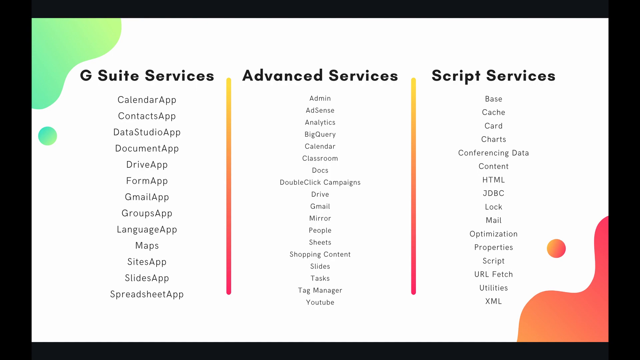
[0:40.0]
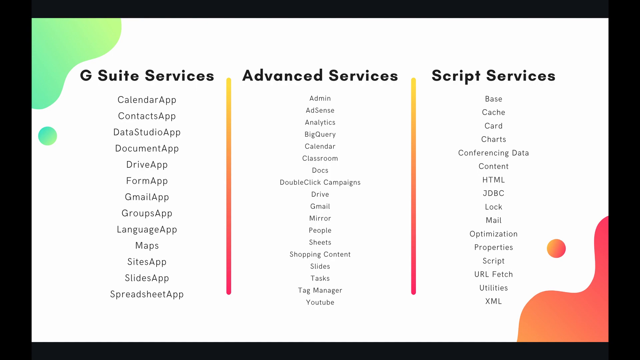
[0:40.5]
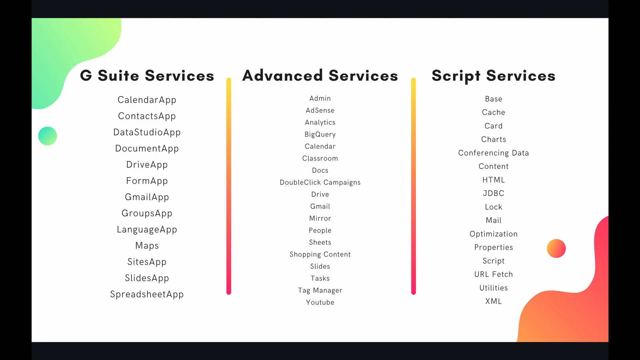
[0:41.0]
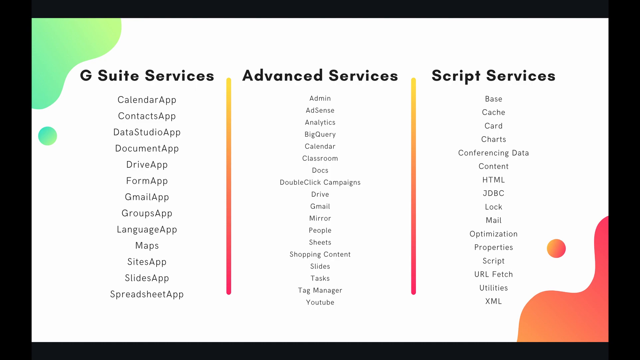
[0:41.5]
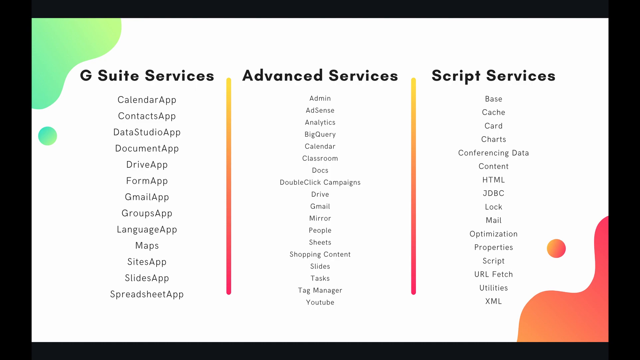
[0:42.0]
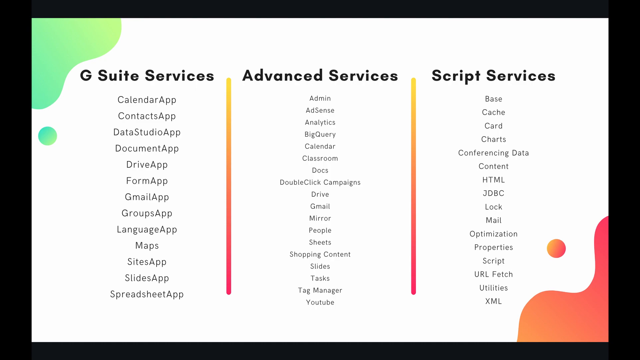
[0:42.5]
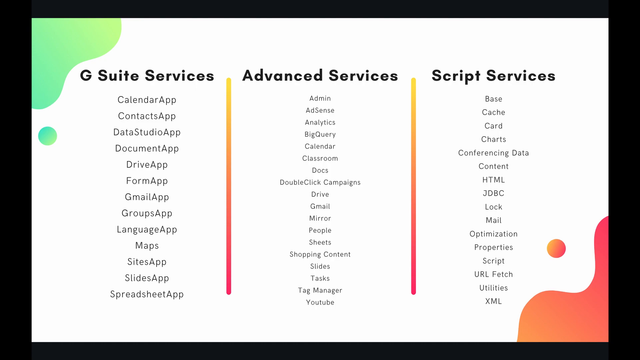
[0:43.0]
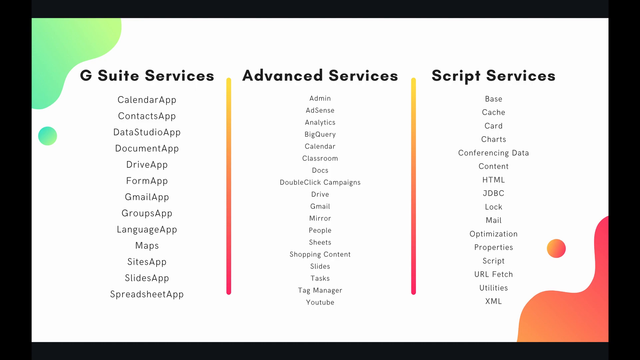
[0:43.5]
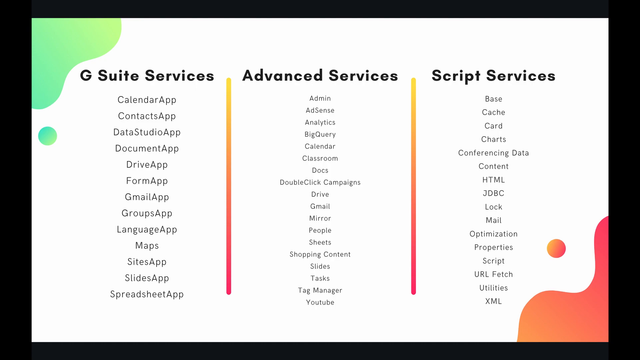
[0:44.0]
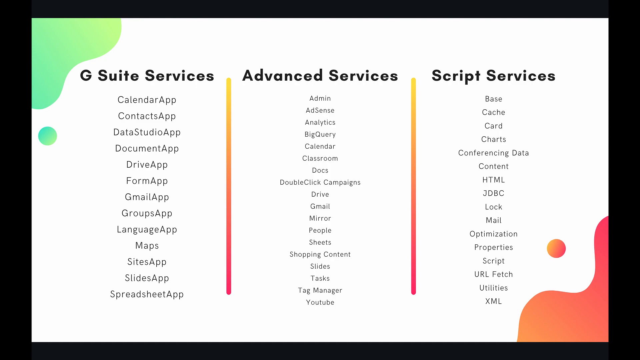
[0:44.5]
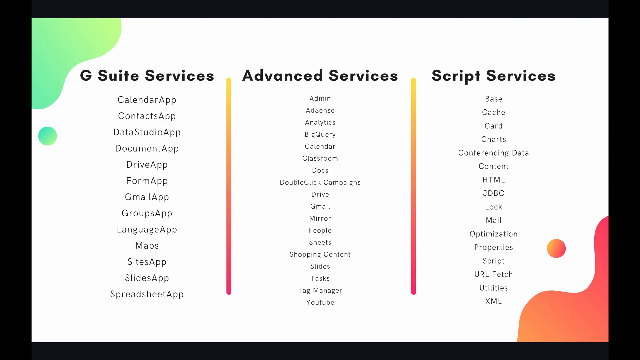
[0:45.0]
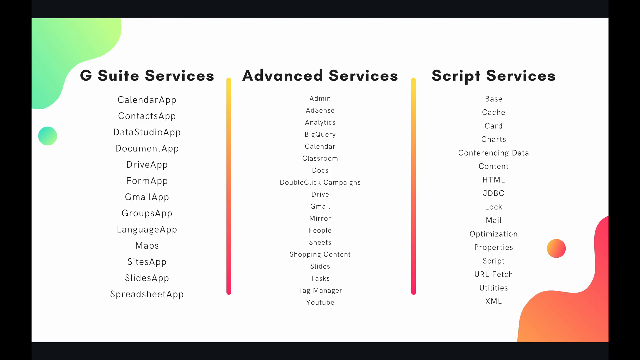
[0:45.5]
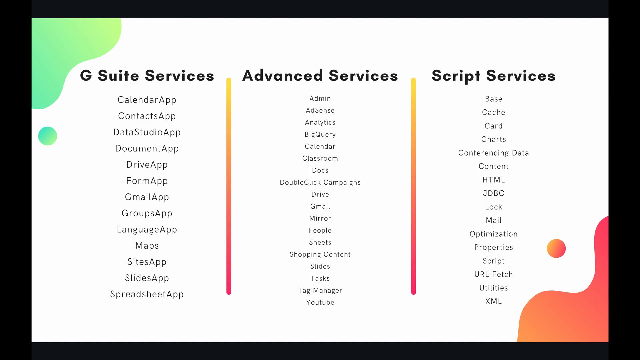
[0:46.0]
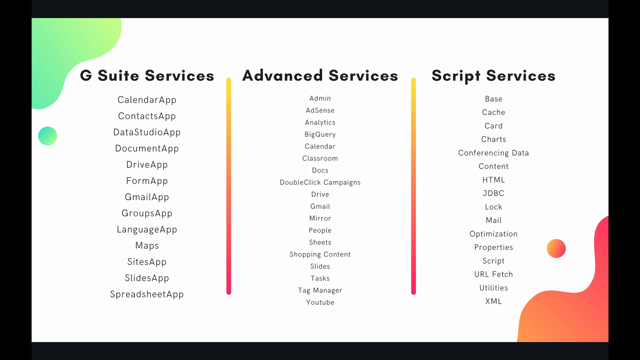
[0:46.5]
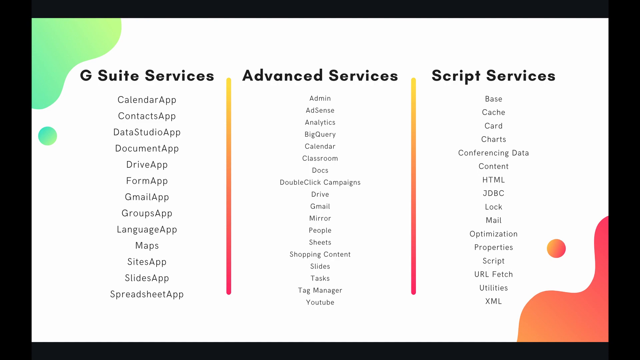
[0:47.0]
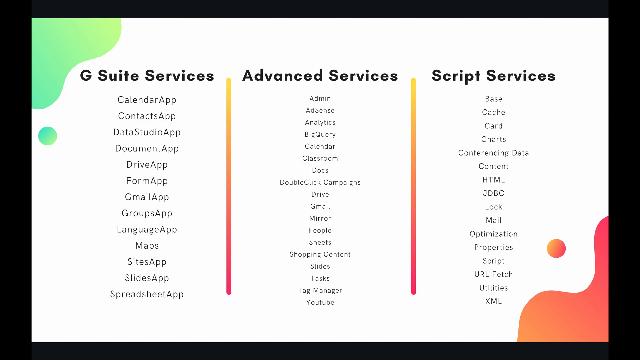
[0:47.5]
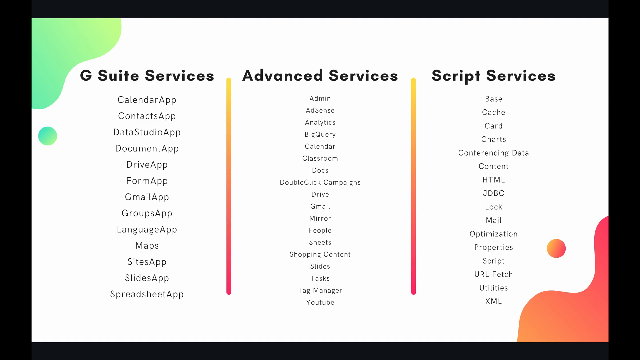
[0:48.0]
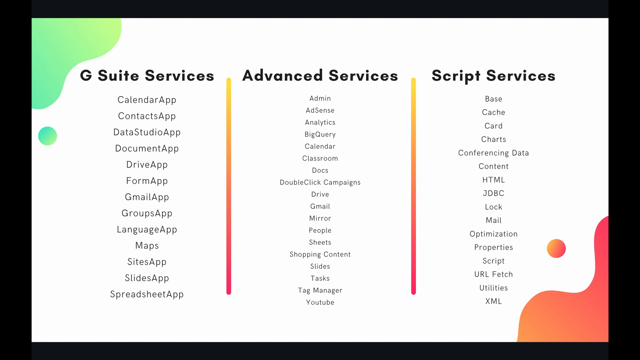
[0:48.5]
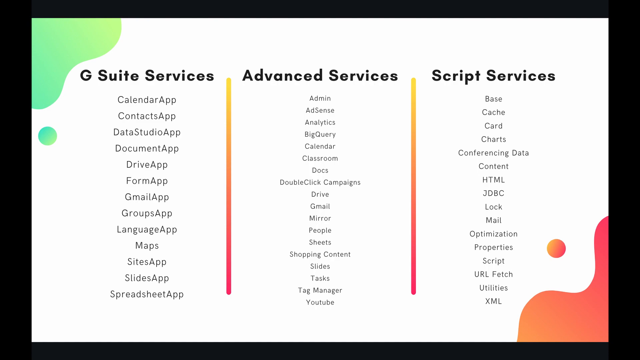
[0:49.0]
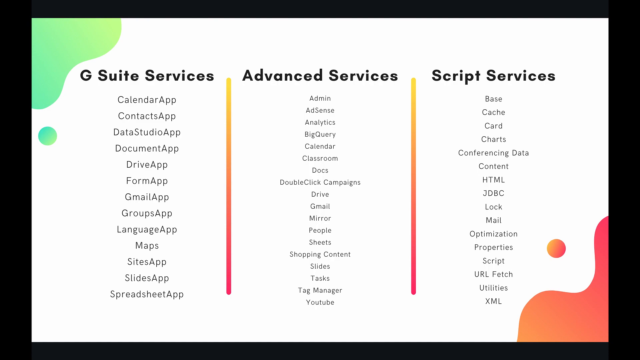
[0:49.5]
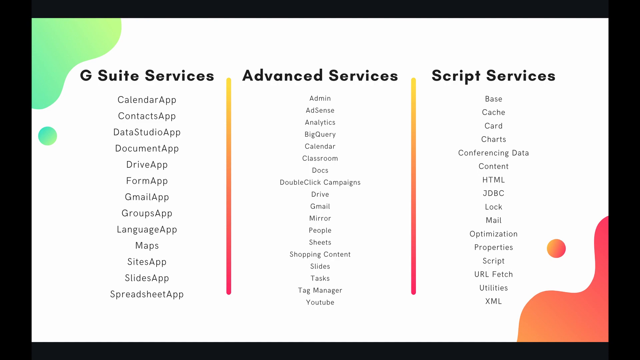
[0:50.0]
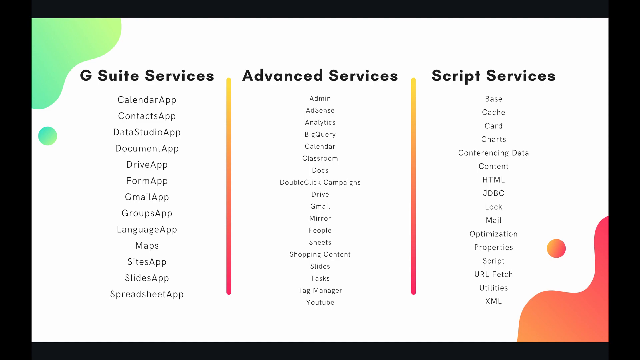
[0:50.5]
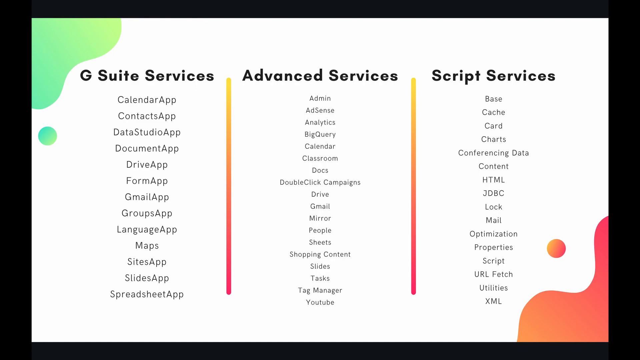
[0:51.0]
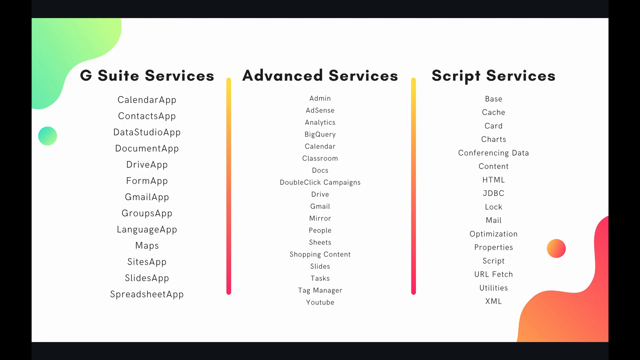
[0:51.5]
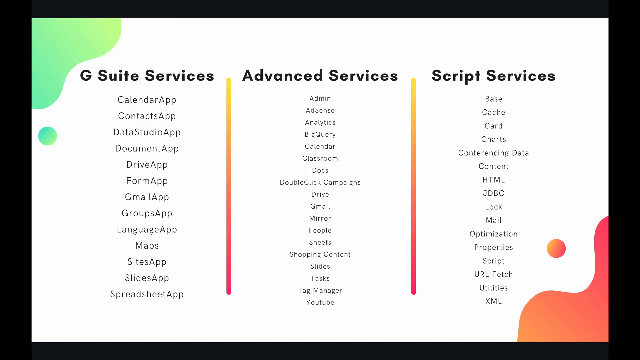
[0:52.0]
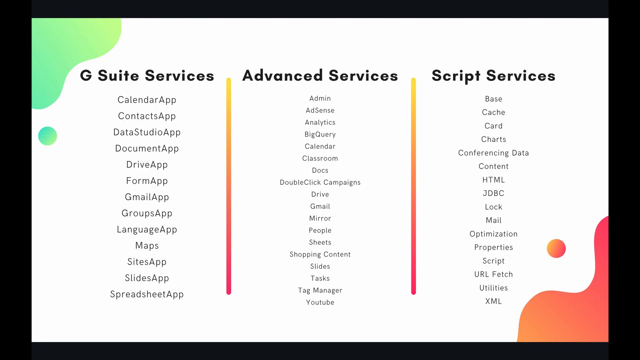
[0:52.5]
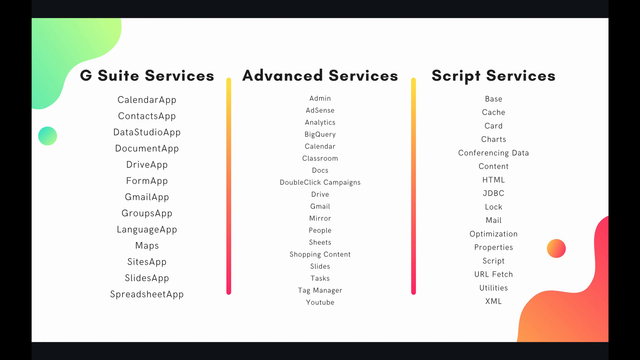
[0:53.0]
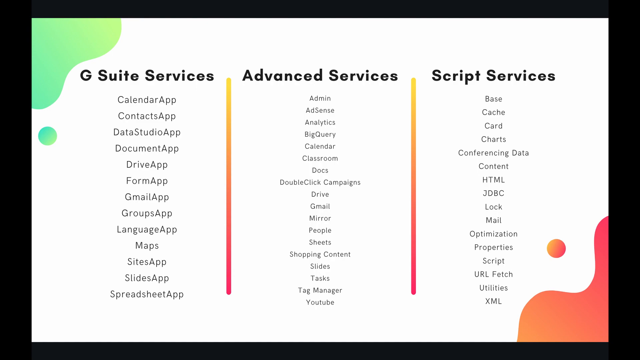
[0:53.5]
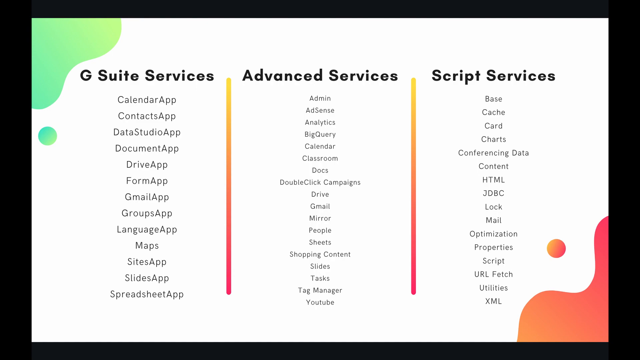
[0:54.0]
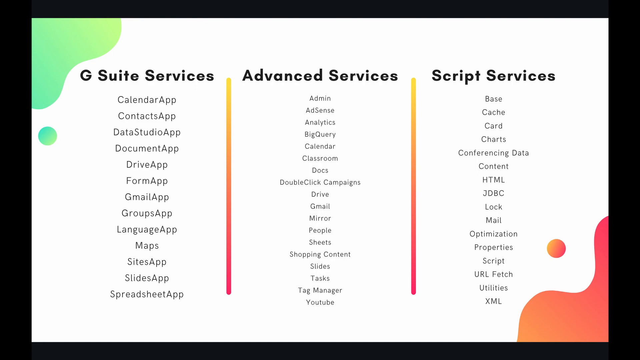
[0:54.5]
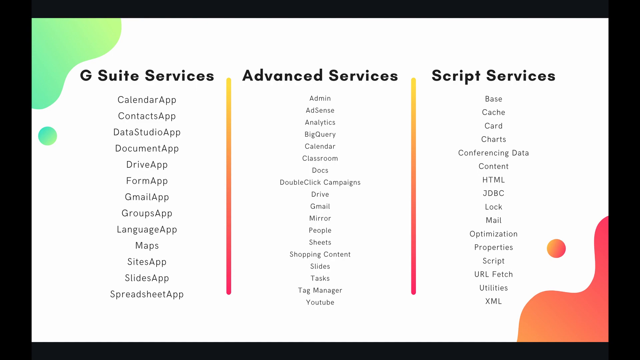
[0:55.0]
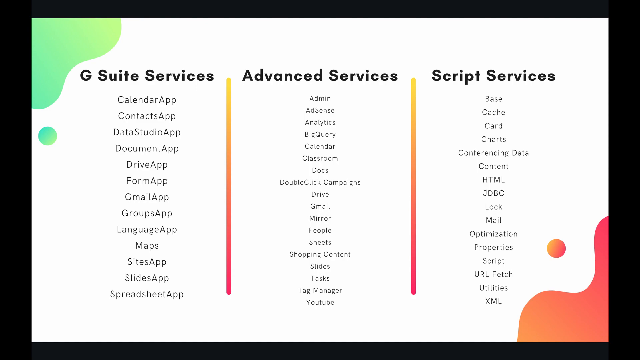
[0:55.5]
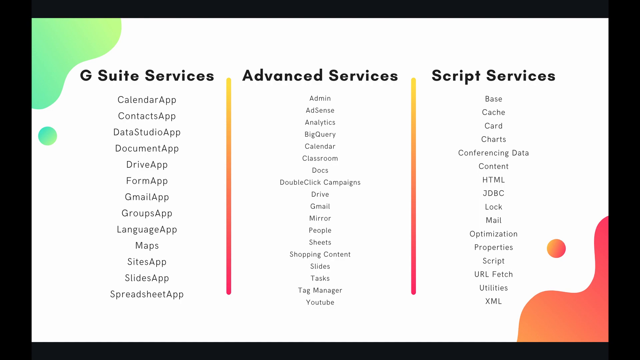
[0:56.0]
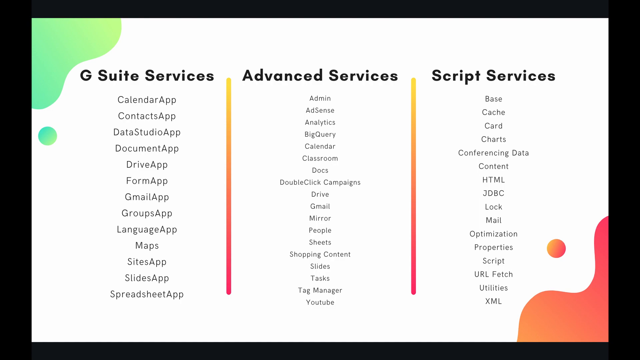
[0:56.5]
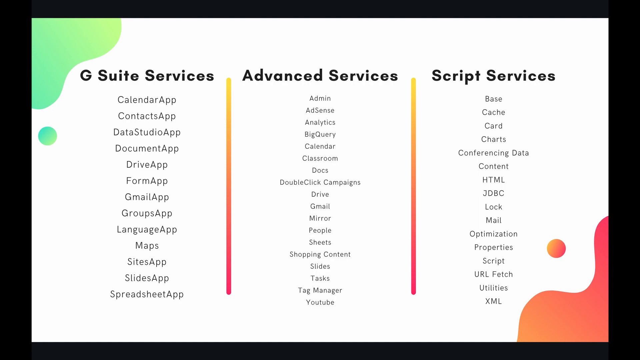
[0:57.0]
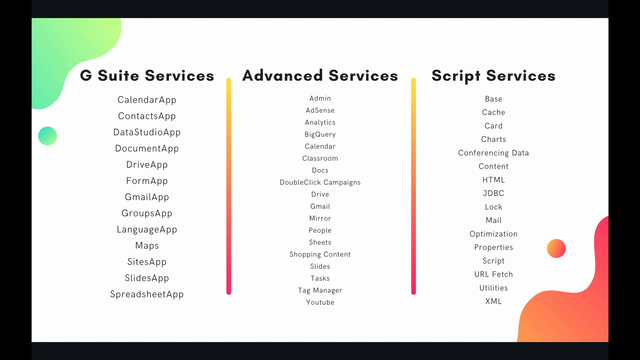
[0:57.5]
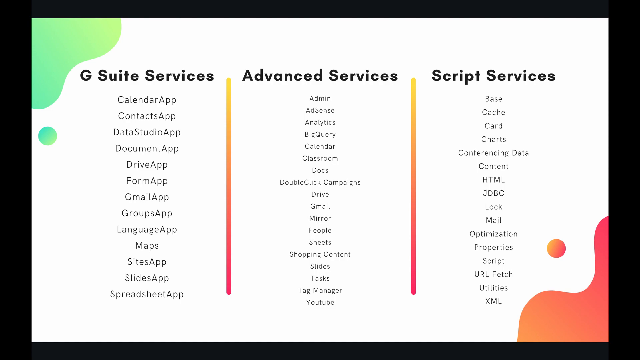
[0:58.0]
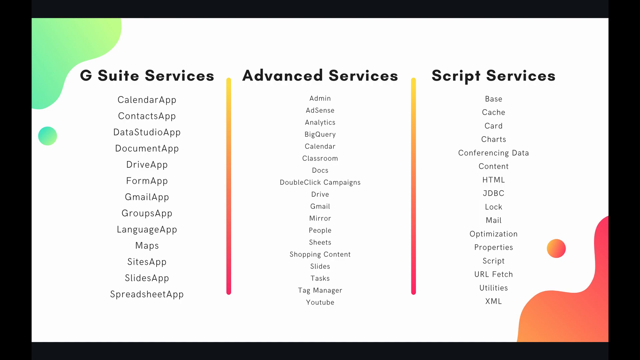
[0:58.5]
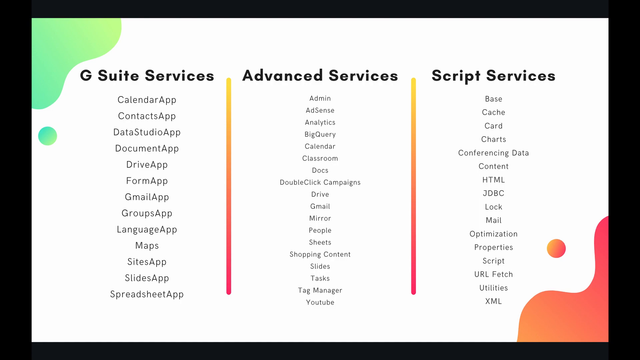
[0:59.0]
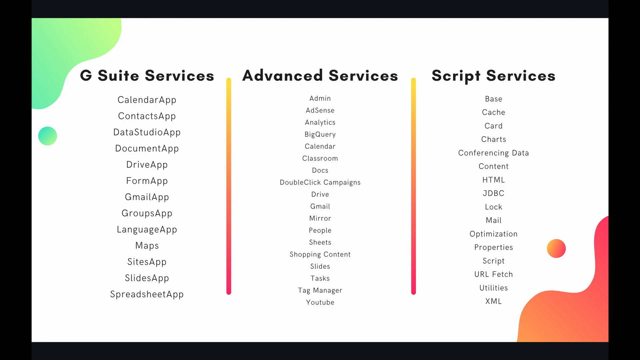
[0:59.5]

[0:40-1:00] A slide with a white background is shown. In the upper left corner is an aqua green blob with a single aqua green circle underneath it. In the lower right corner is a reddish-orange blob and a reddish-orange circle. The titles "G Suite Services", "Advanced Services" and "Script Services" sit above three columns. Under G Suite Services are Calendar app, Contacts app, Data Studio app, Document app, Drive app, Form app, Gmail app, Groups app, Language app, Maps, Sites app, Slides app, Spreadsheet app. Under Advanced Services are Admin, AdSense, Analytics, BigQuery, Calendar, Classroom, Docs, DoubleClick campaigns, Drive, Gmail, Mirror, People, Sheets, Shopping content, Slides, Tasks, Tag Manager, YouTube. Under Script Services are Base, Cache, Card, Charts, Conferencing data, Content, HTML, JDBC, Lock, Mail, Optimization, Property, Script, URL Fetch, Utilities, and XML. The slide stays on screen with no animation and no cuts to other slides. Between the columns of products is a vertical line that is orange at the top and gets more red lower down.